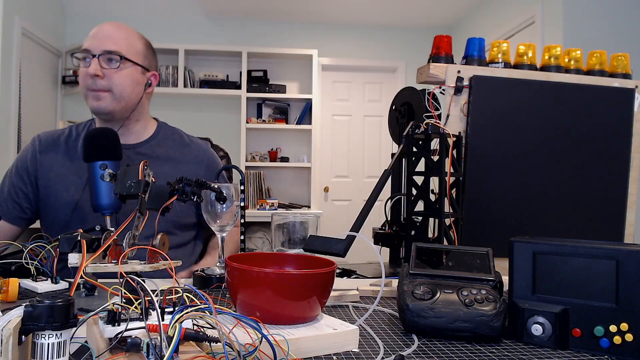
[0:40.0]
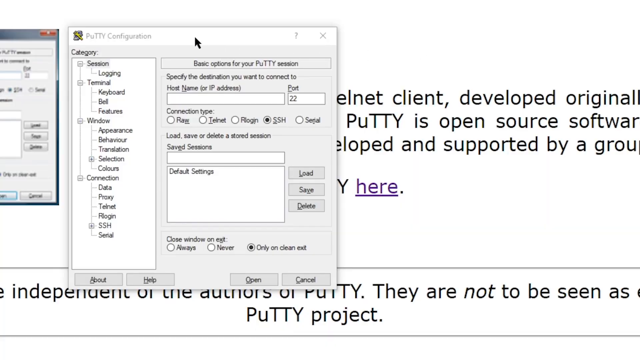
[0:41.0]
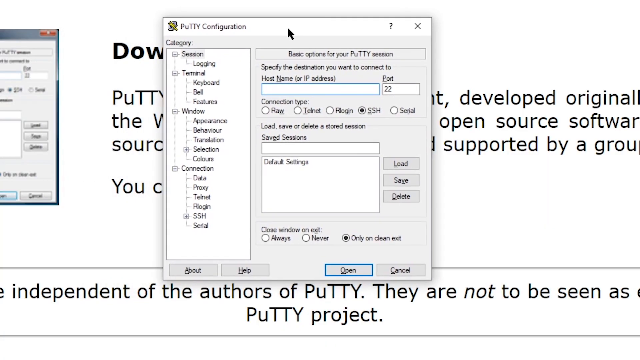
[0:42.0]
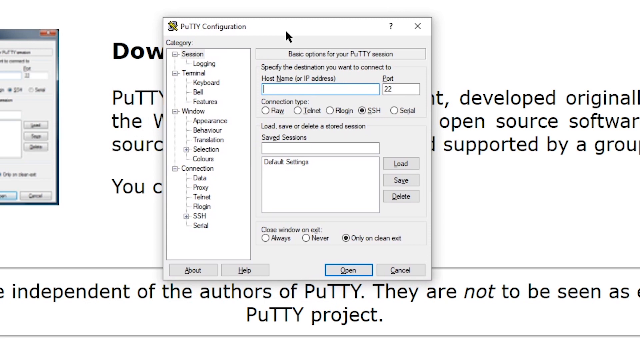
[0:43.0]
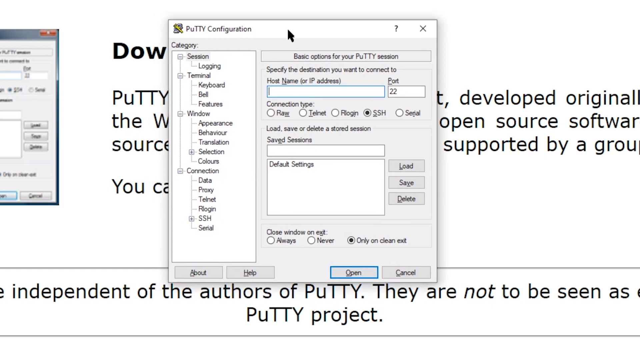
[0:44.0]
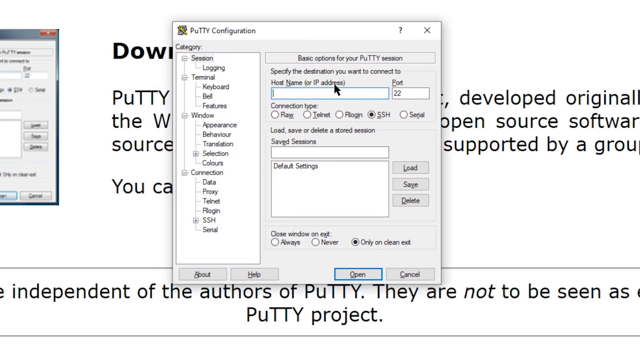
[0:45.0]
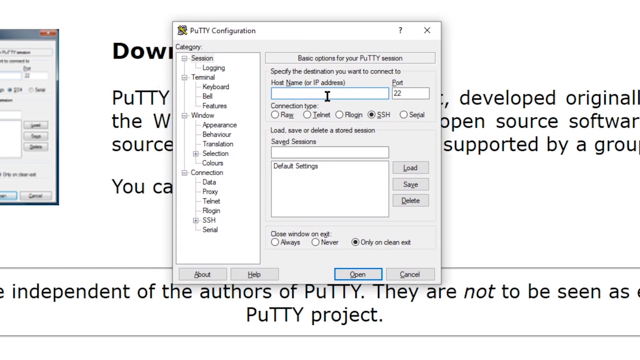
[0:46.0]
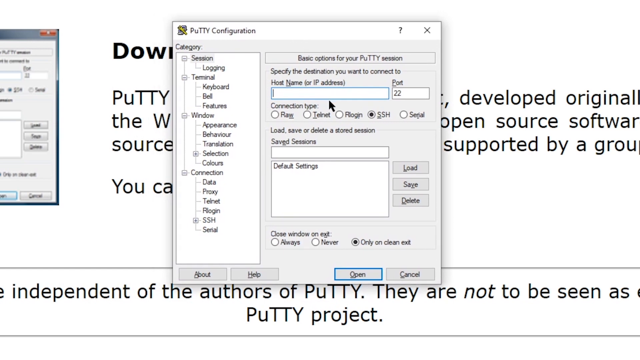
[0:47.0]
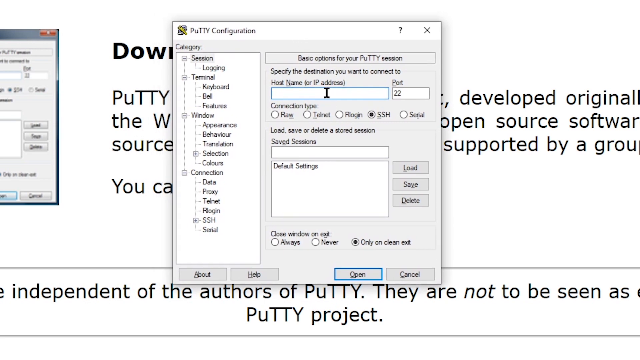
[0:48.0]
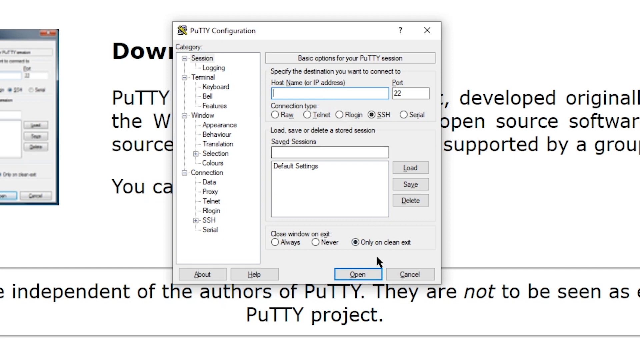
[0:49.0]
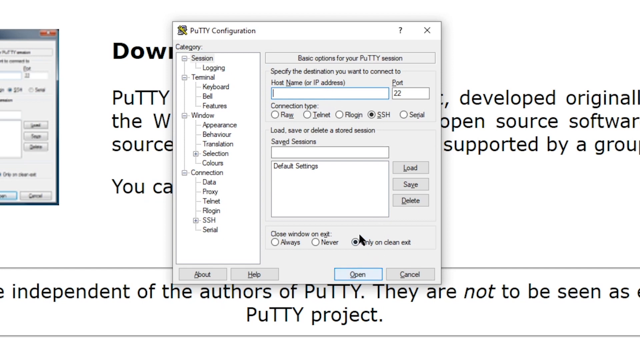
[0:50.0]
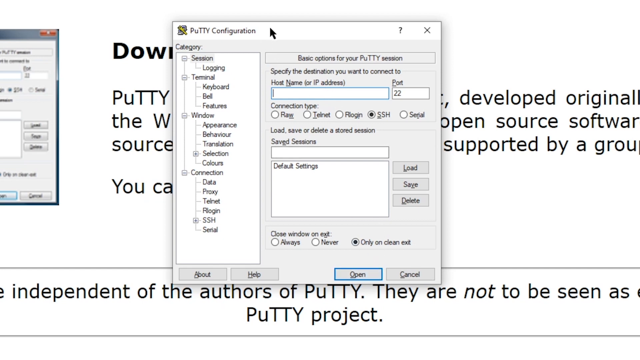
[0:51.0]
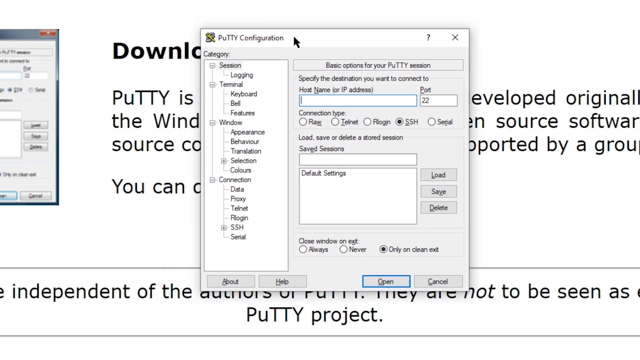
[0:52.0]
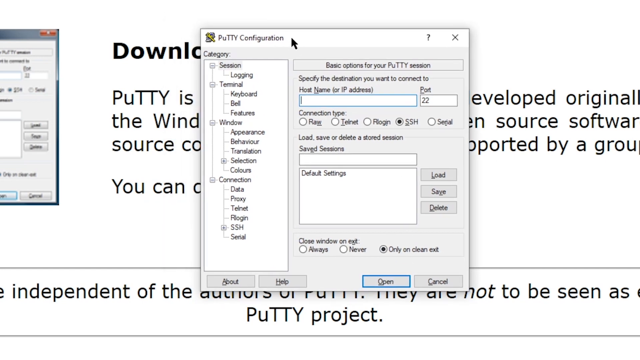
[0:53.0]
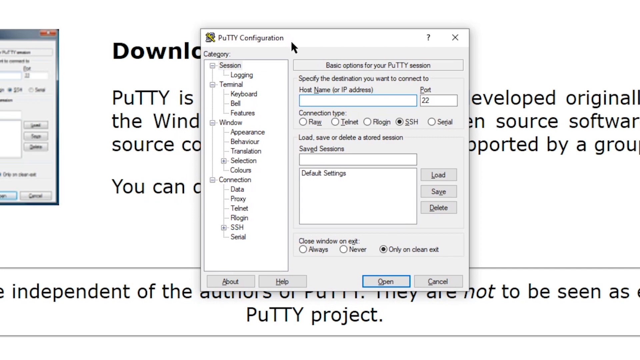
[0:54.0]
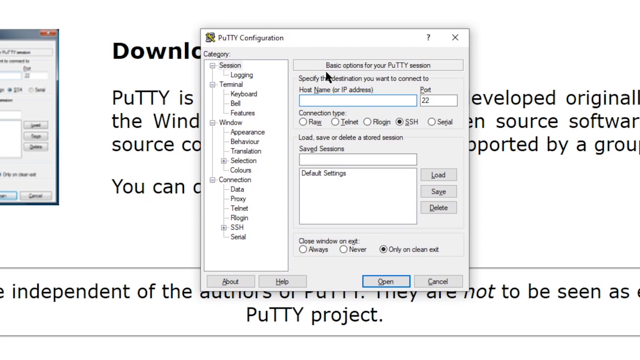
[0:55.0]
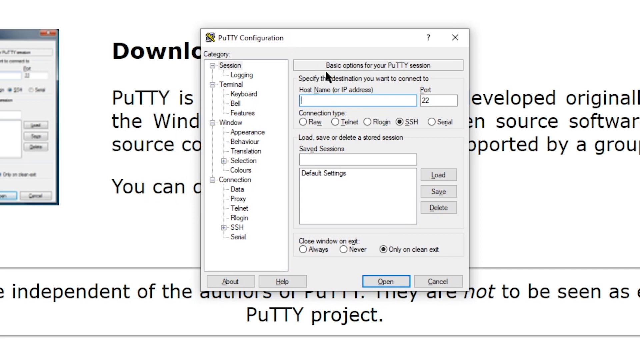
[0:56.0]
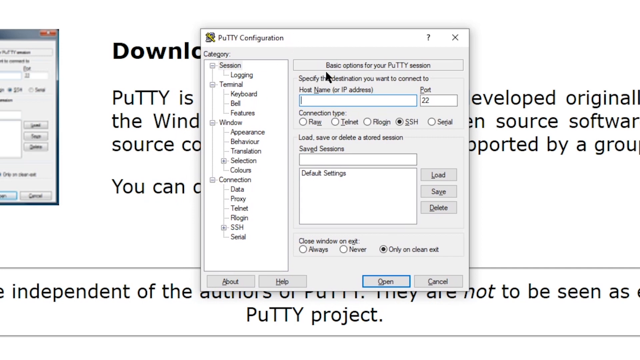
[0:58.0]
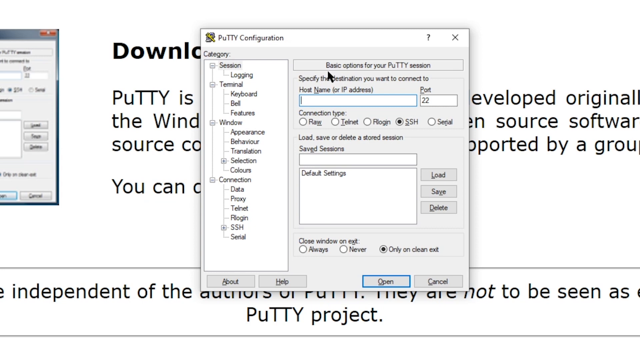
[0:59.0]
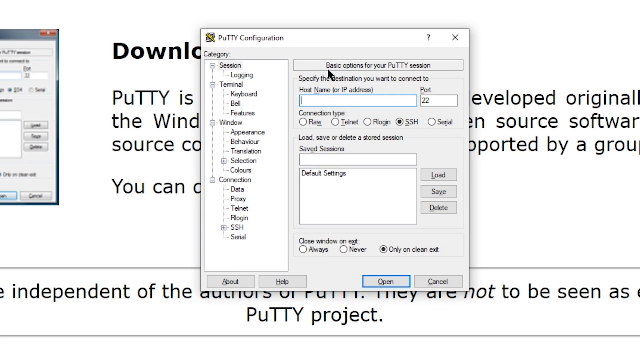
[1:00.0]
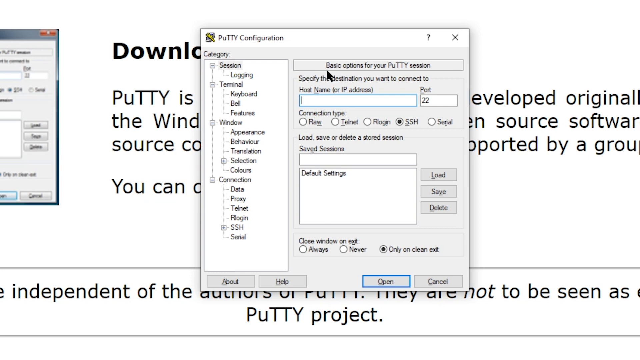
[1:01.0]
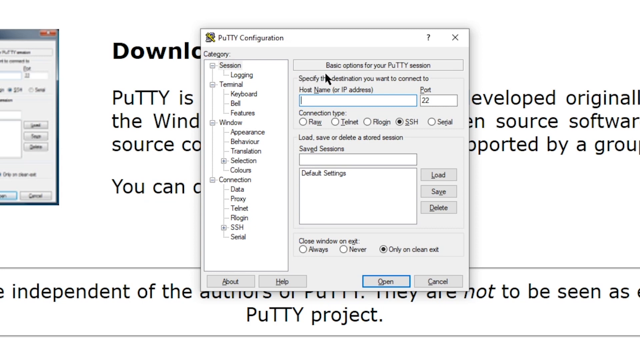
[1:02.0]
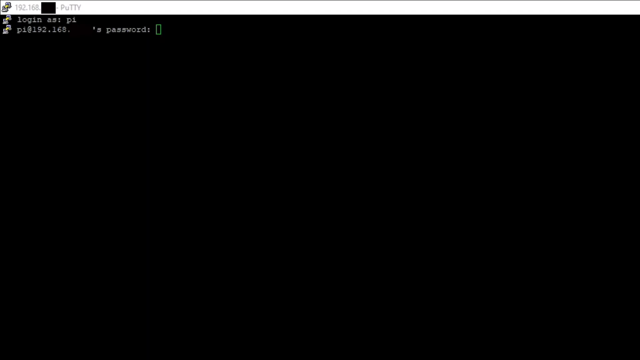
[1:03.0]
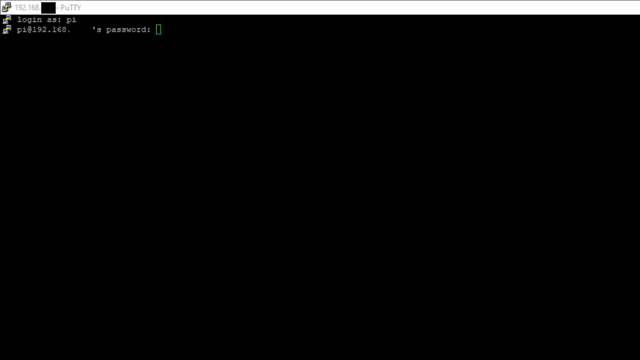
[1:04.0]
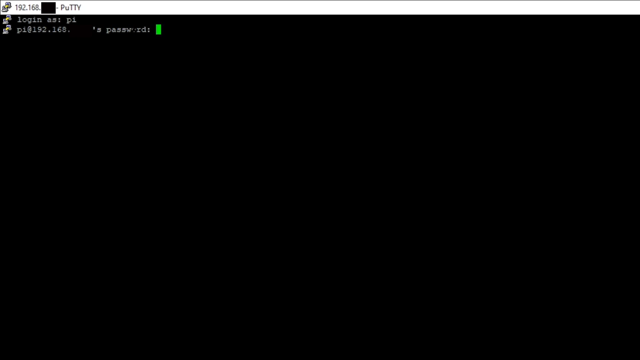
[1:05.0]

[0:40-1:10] The man, who seems to be doing something with cameras, shows how to do something on screen. A window titled "PuTTY" is open, with the P capitalised, the u lowercase and the TTY capitalised, labelled as PuTTY configuration; next to it is what looks like a saw icon, with something unclear below it. The open window says "basic options for your putty session" and "specify the destination you want to connect to", with fields for "host name or IP address" and "port", and a connection type. SSH is selected. There are options to "load, save, or delete a stored session", "saved sessions" and "default settings", and the Open button appears outlined in blue. The cursor moves around over the host IP address field, the window is dragged around a little, and then the movement stops.